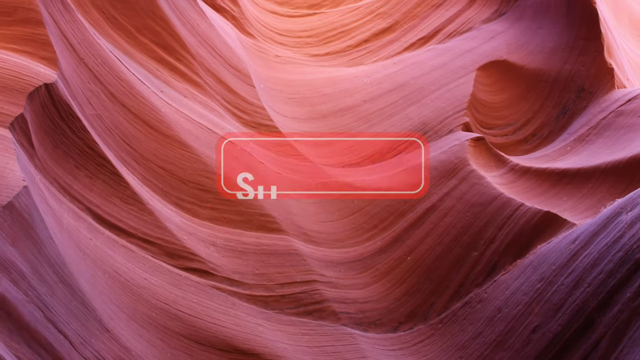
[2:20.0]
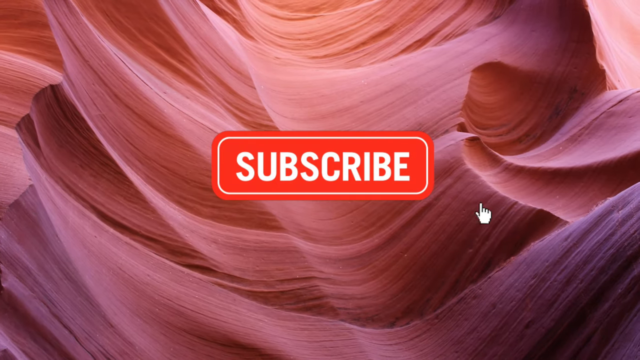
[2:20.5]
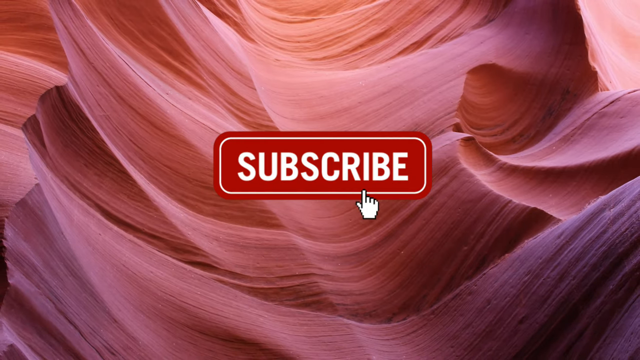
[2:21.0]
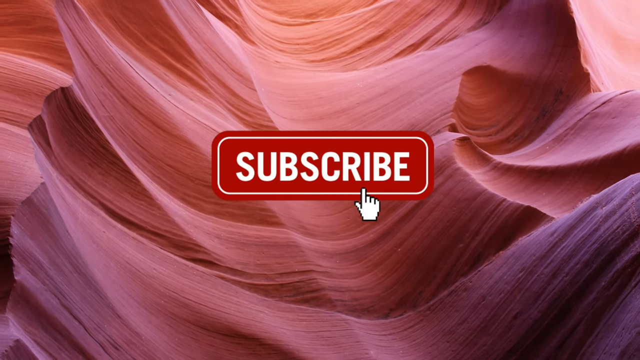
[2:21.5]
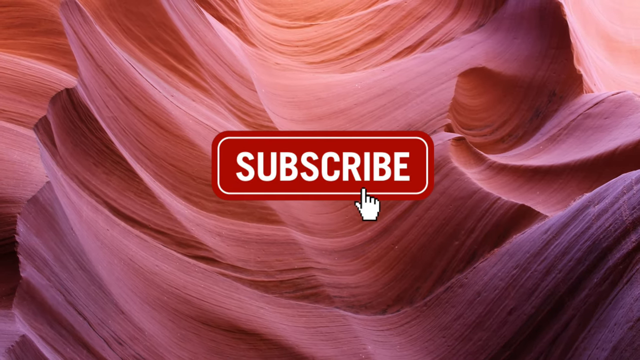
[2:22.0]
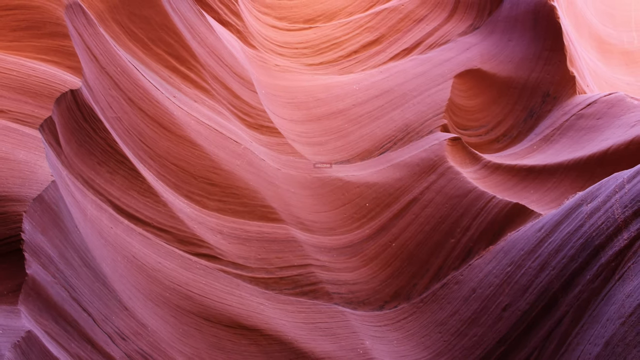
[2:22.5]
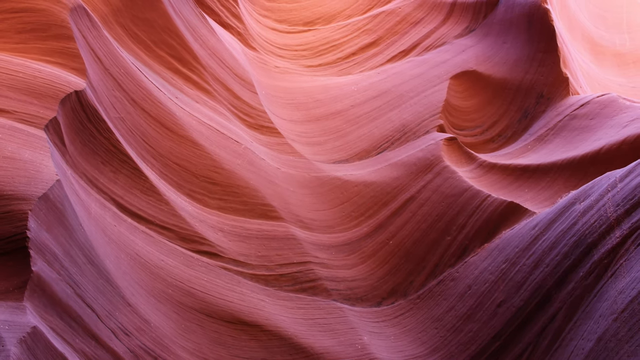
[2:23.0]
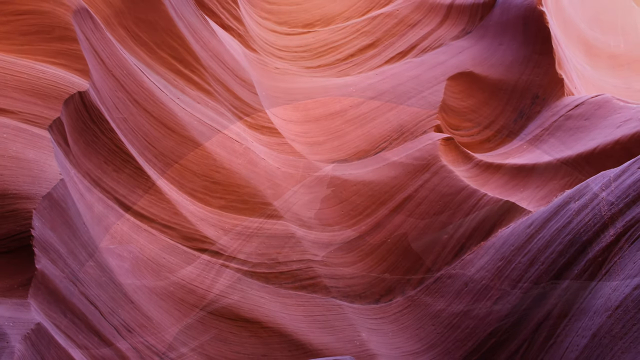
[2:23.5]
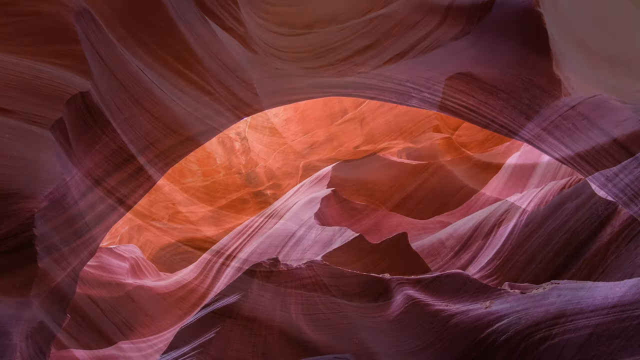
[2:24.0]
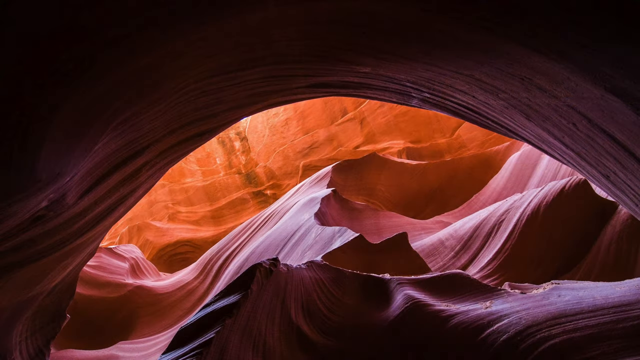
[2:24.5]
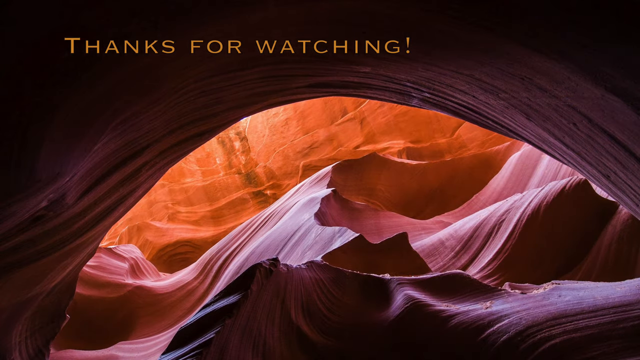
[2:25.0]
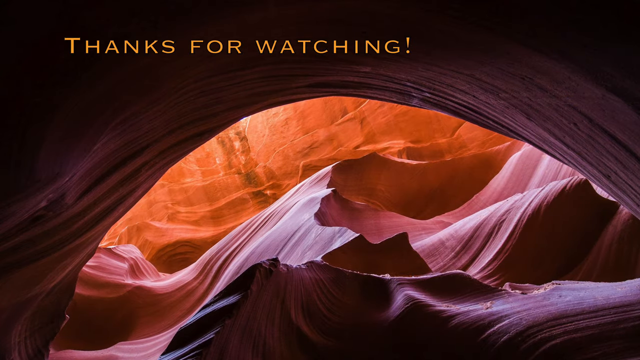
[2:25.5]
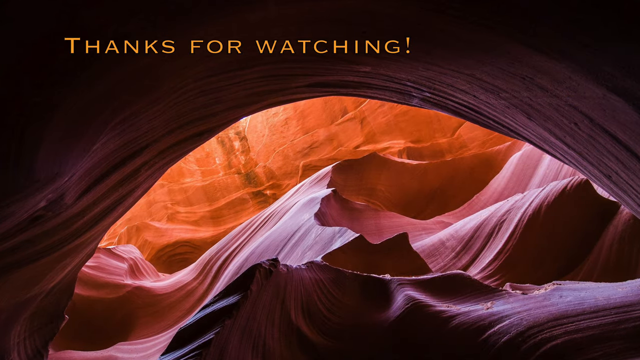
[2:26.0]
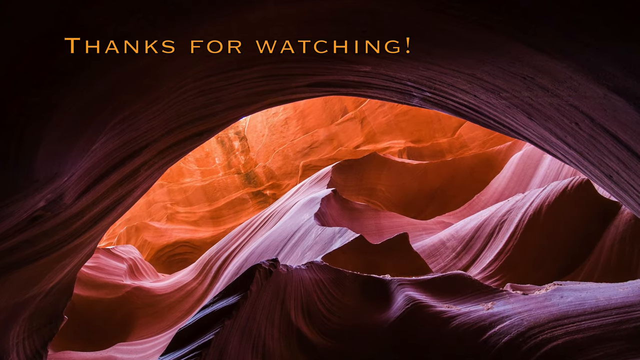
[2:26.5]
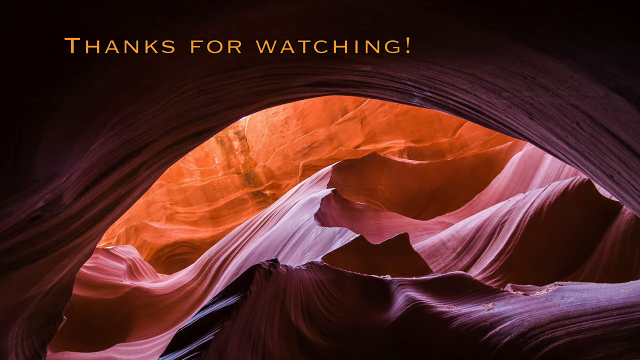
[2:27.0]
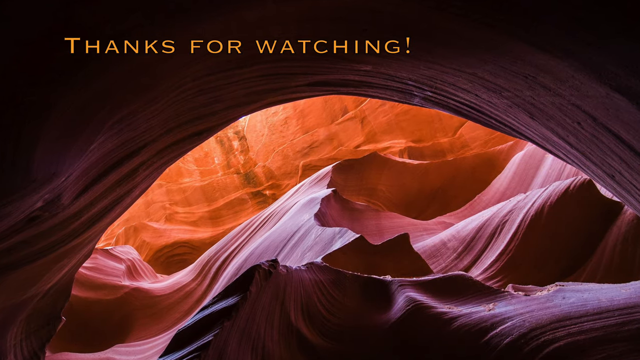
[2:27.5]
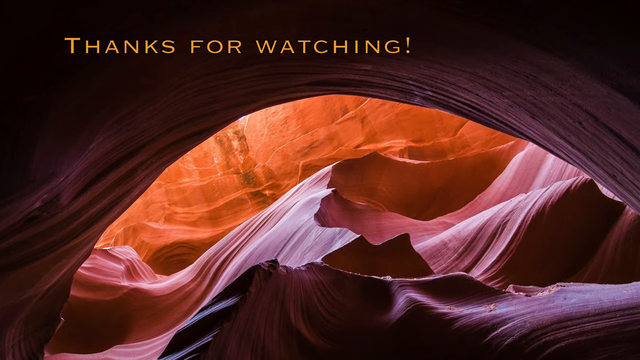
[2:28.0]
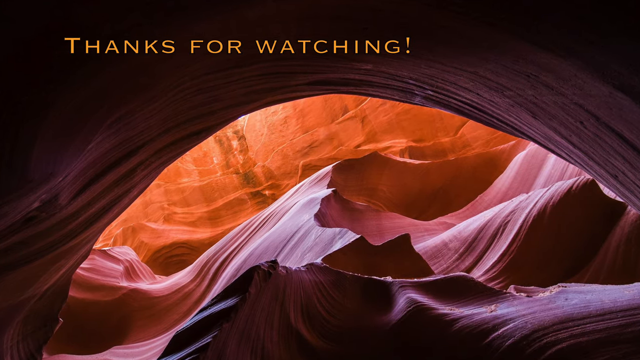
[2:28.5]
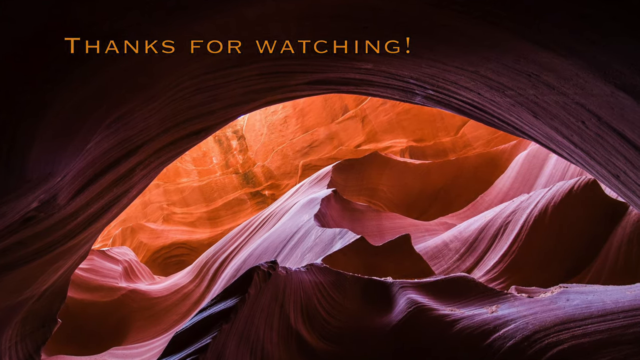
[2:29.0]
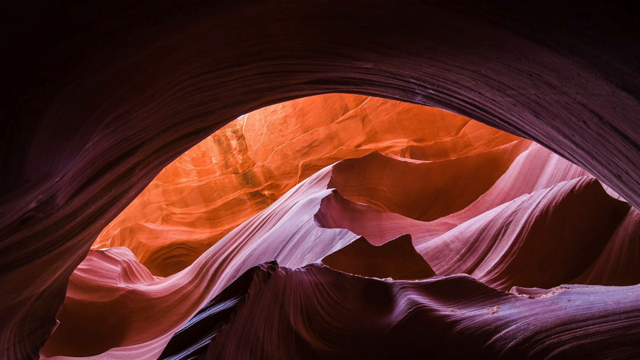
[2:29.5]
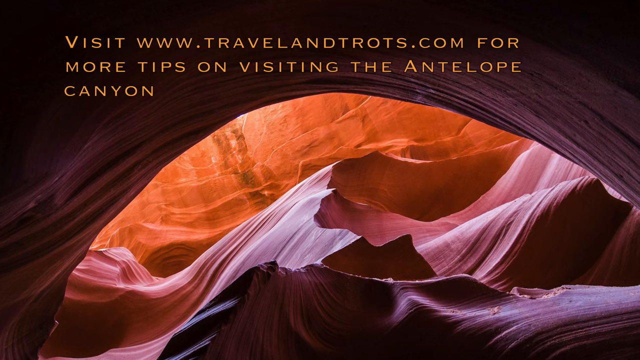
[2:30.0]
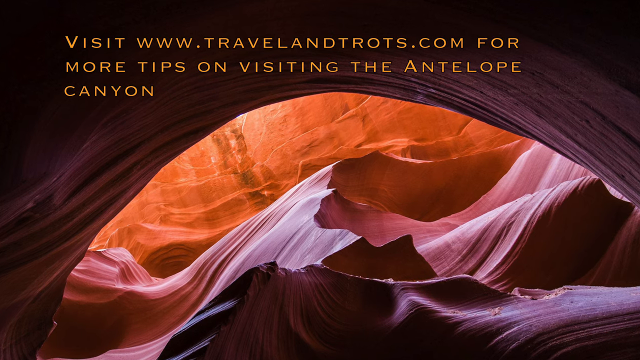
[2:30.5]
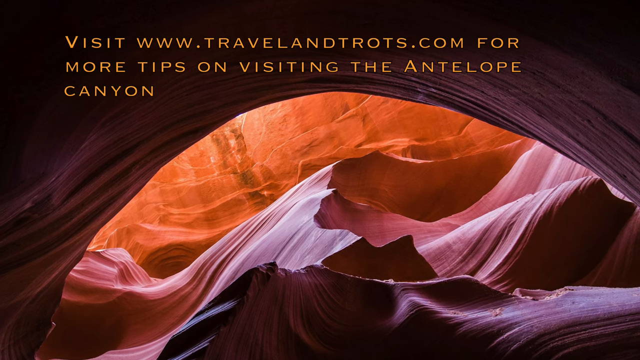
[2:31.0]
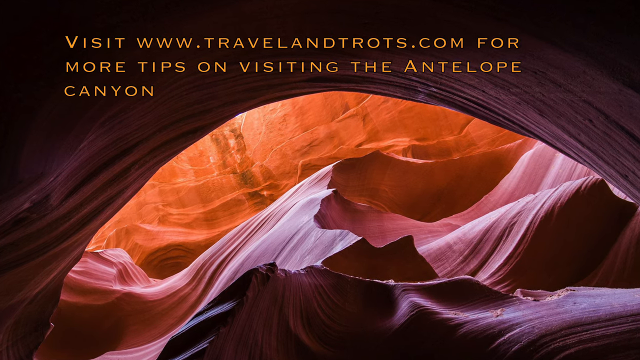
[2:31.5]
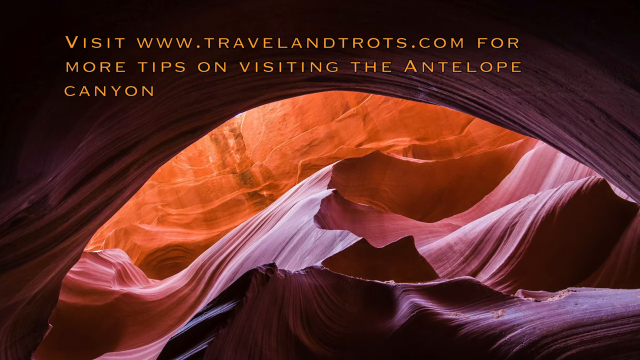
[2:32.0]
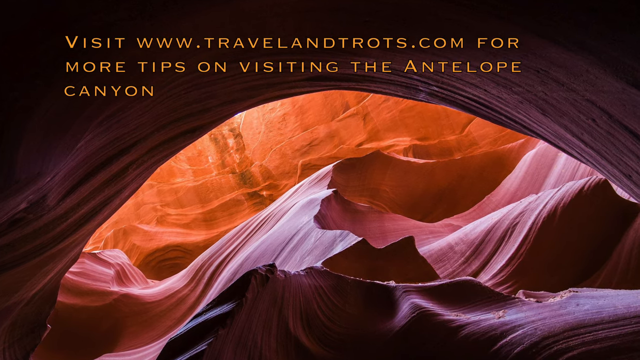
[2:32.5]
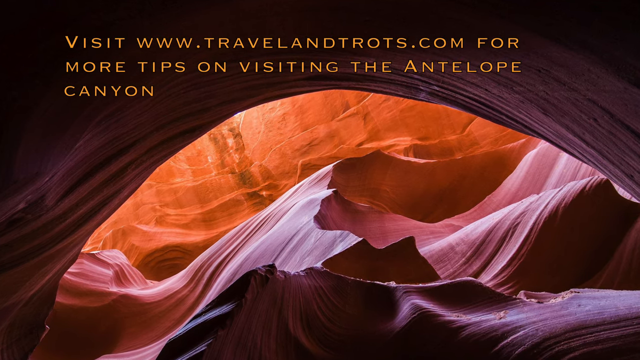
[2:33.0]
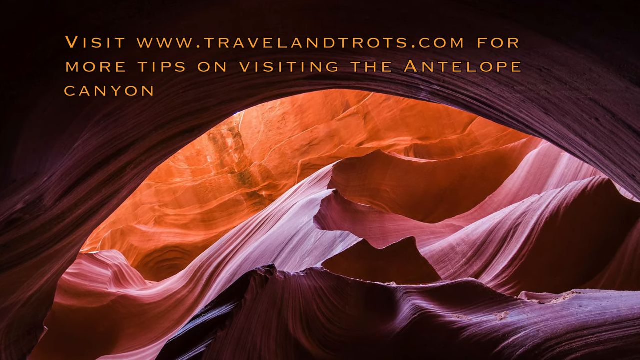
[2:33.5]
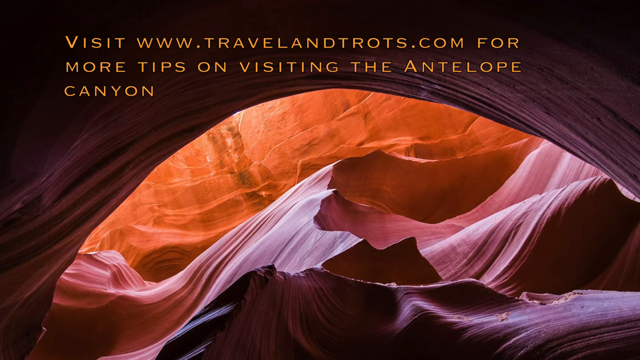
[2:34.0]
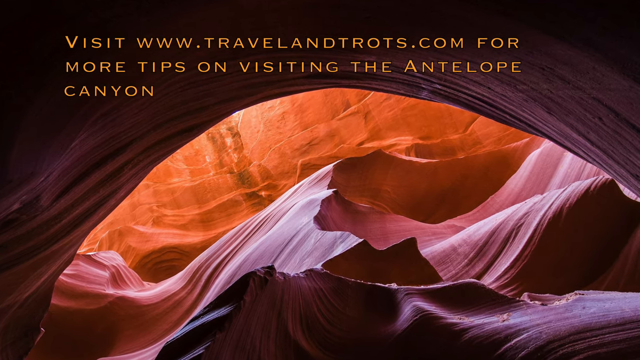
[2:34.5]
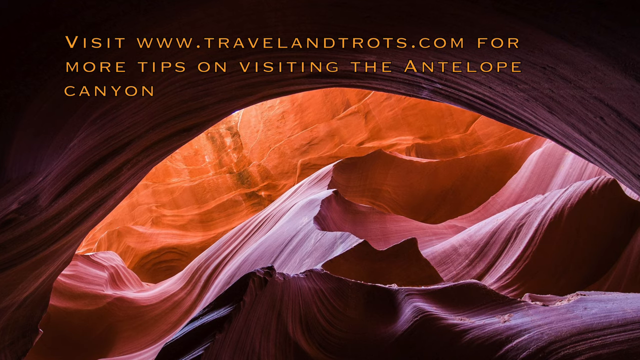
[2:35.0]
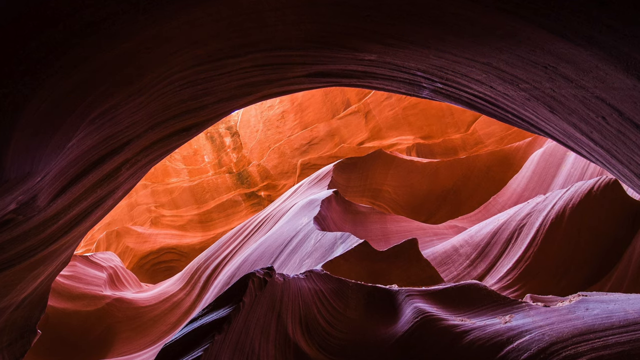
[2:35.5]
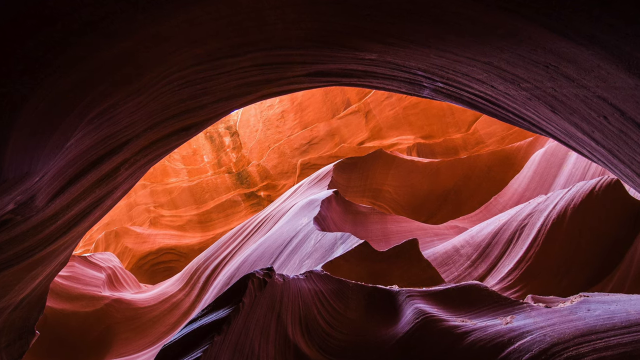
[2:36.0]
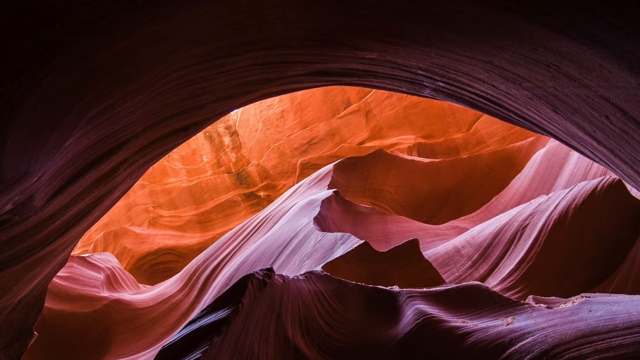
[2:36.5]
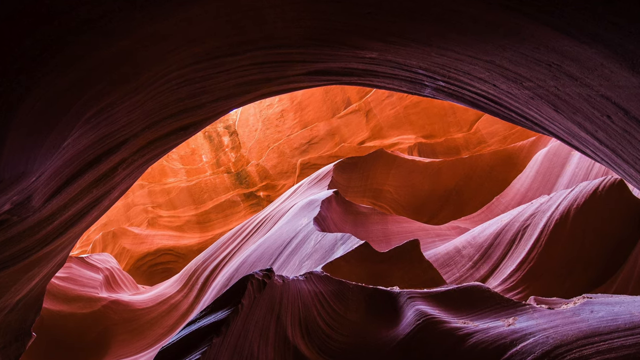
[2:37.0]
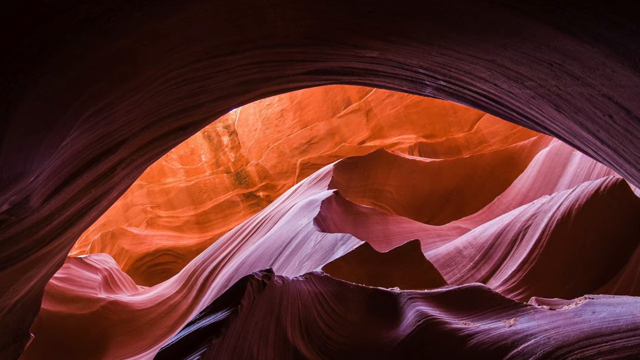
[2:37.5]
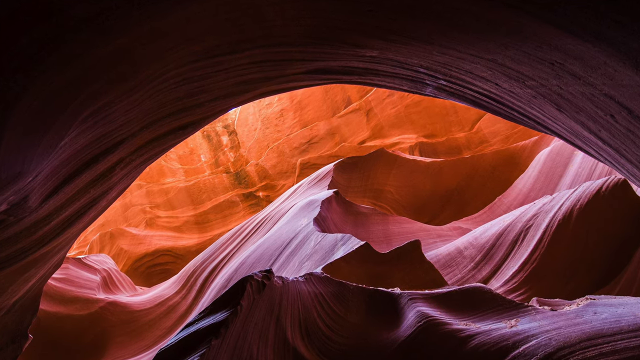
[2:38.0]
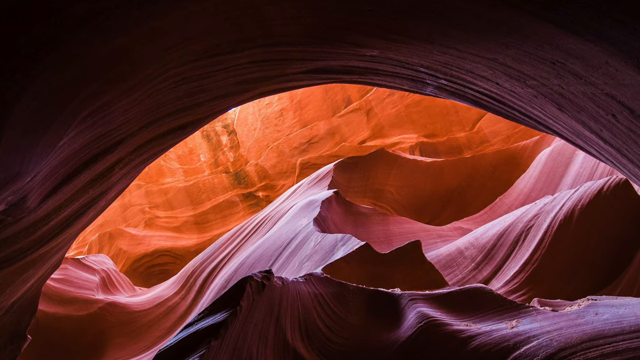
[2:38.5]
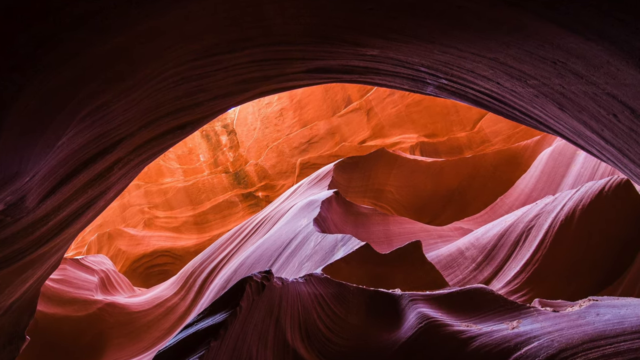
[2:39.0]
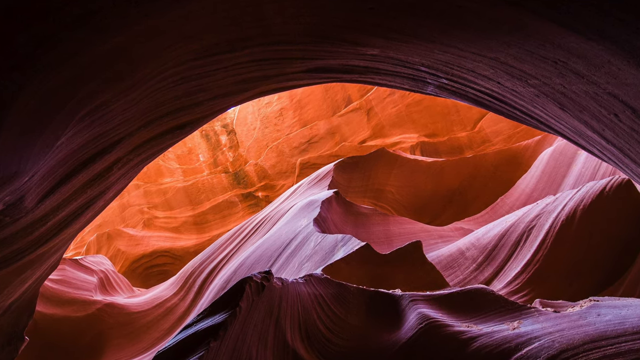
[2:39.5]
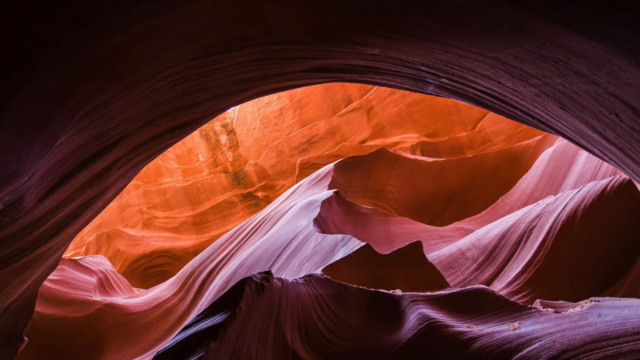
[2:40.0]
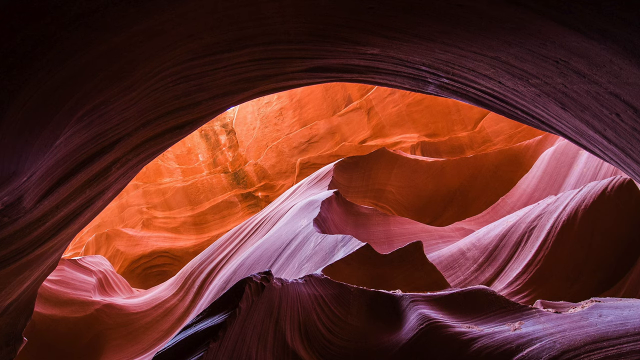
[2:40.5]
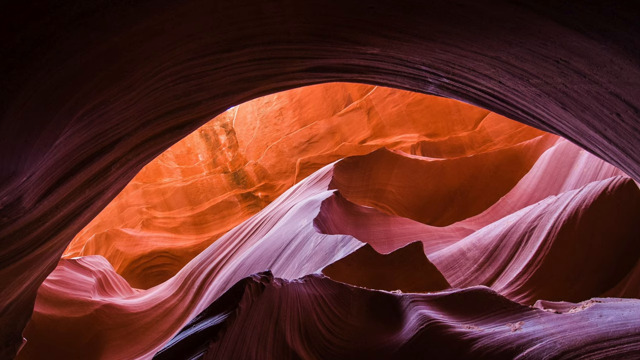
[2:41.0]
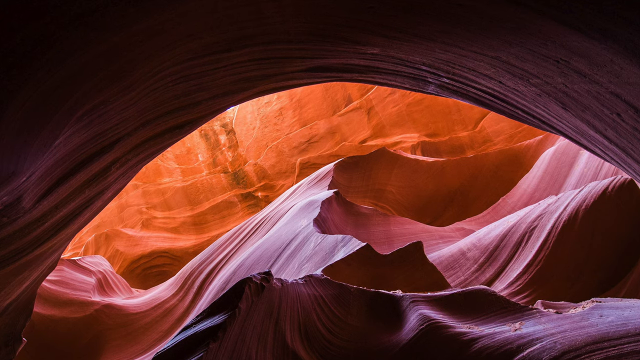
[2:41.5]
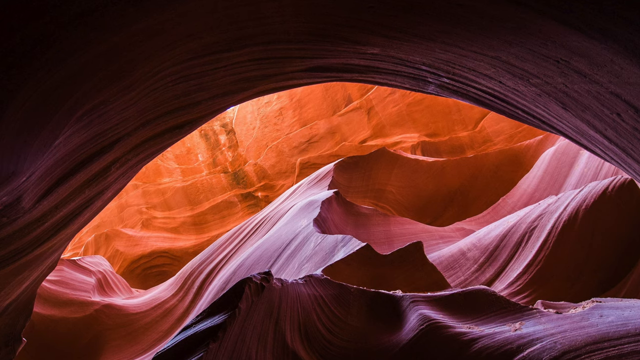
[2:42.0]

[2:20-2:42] A white graphic on a red background with a white frame shows a thumbnail of a finger pressing on the word "subscribe". In the background, the brown walls of the canyon continue, striped and forming web-like features, with bumps, pillars and walls from left to right. The view zooms in, and the hand appears and disappears. The words "thanks for watching" pop up on the screen. A final image of the canyon appears, showing a dome-shaped entrance with a fluffy, mountainous or hilly landscape. The view zooms in, and information pops up: "visit www.traveltrots.com for more tips on visiting the Antelope Canyon".